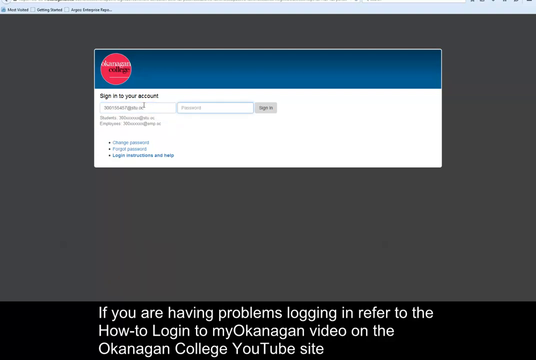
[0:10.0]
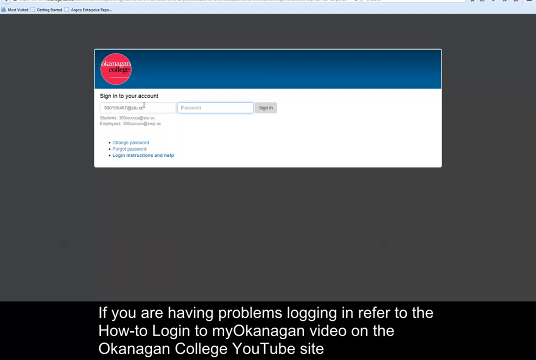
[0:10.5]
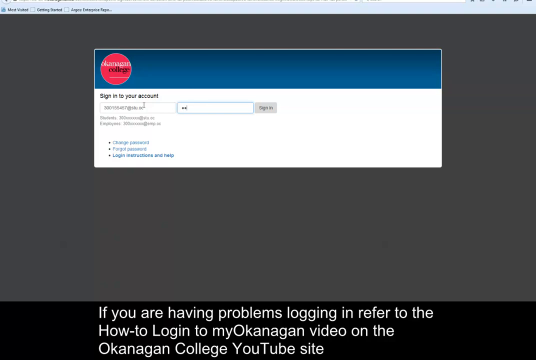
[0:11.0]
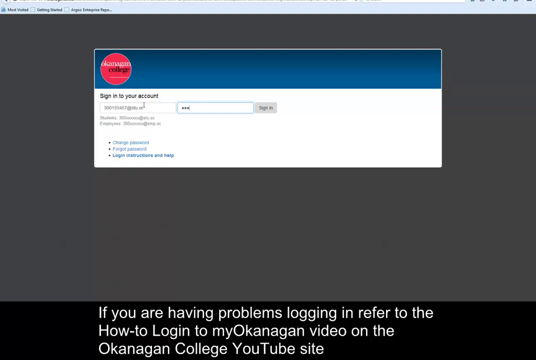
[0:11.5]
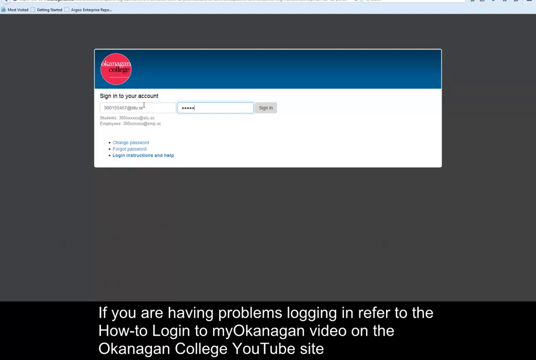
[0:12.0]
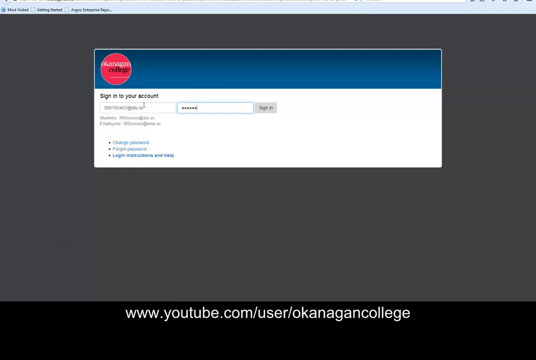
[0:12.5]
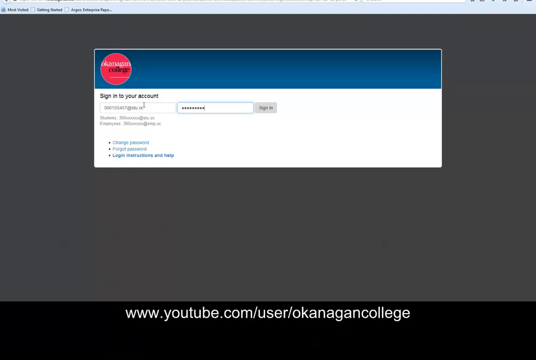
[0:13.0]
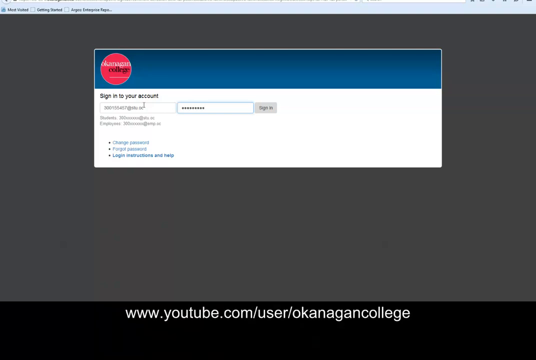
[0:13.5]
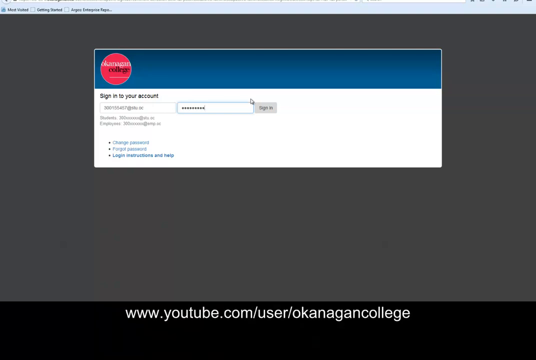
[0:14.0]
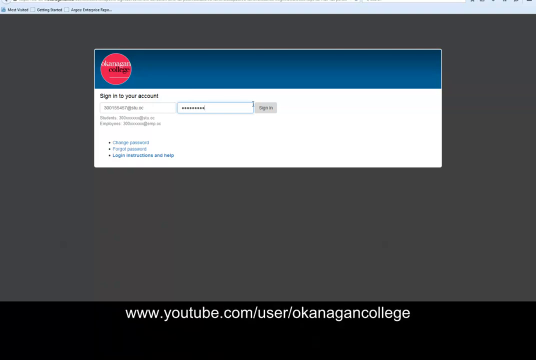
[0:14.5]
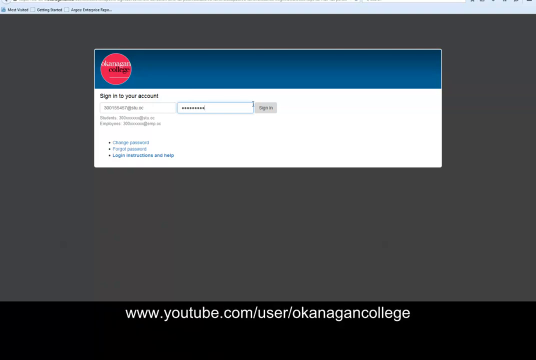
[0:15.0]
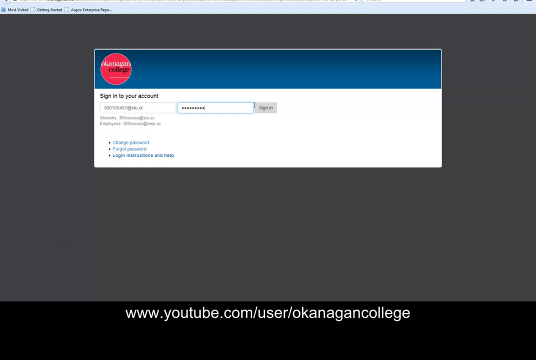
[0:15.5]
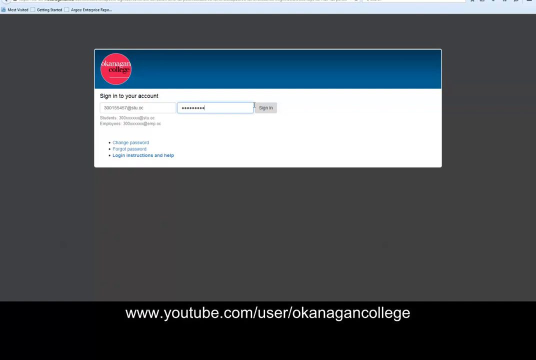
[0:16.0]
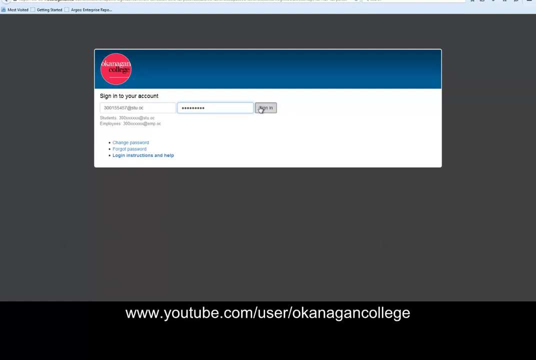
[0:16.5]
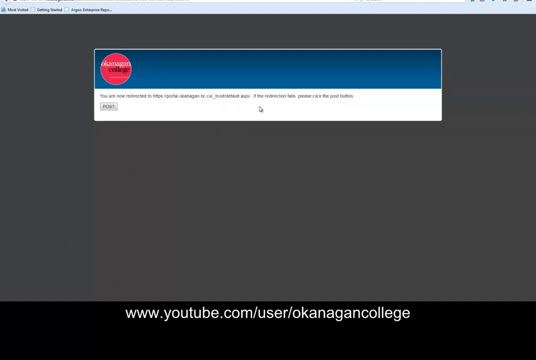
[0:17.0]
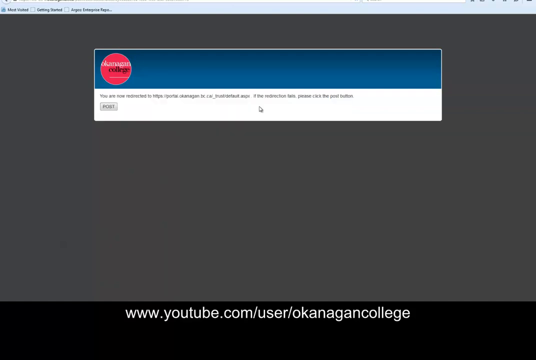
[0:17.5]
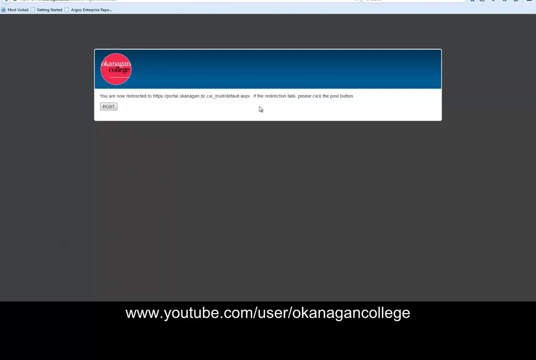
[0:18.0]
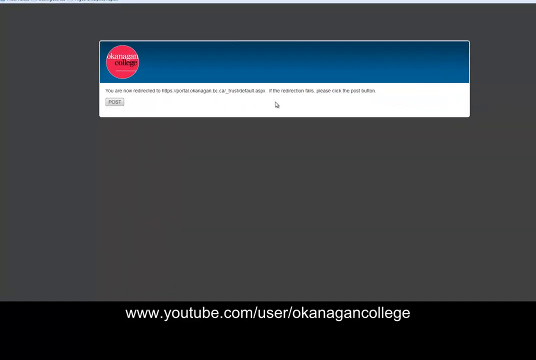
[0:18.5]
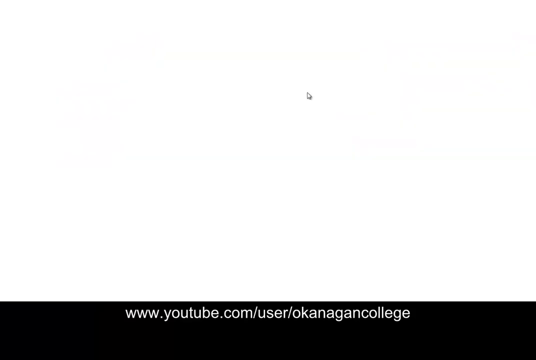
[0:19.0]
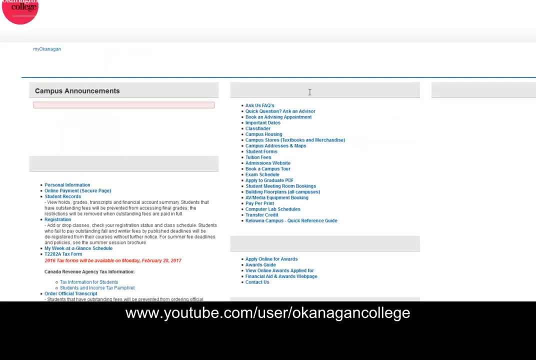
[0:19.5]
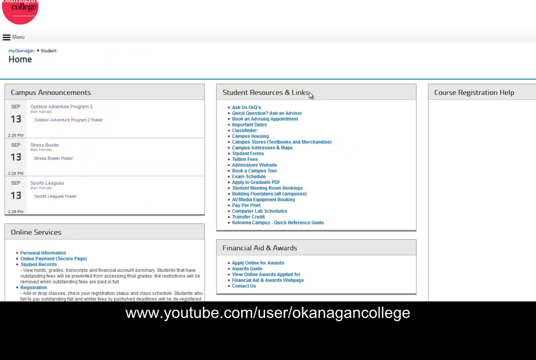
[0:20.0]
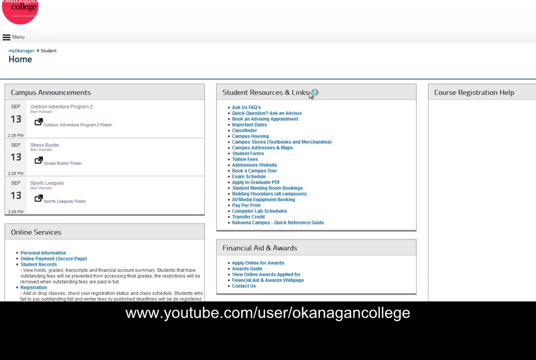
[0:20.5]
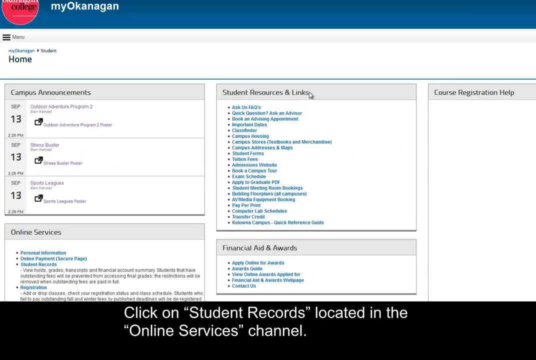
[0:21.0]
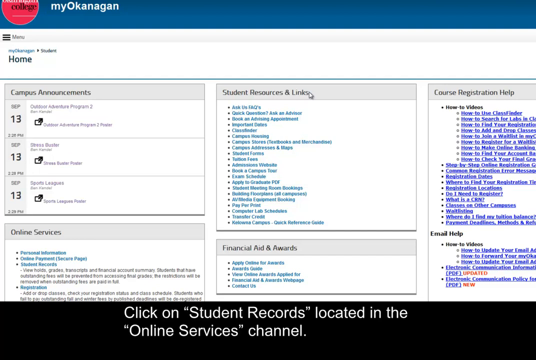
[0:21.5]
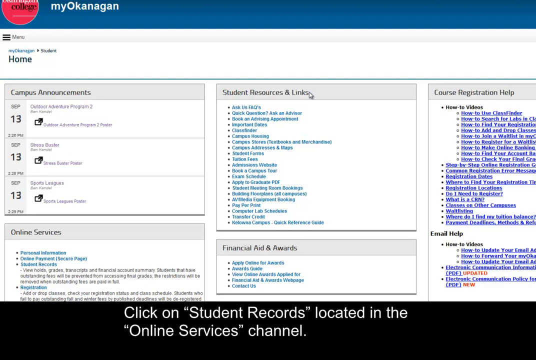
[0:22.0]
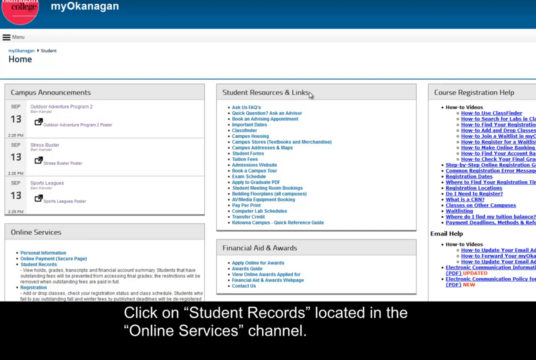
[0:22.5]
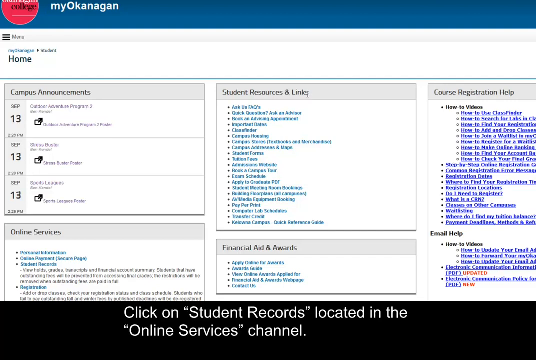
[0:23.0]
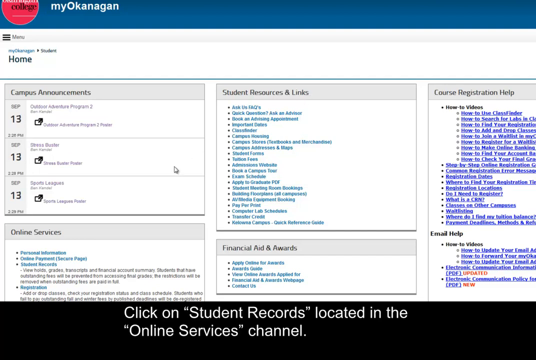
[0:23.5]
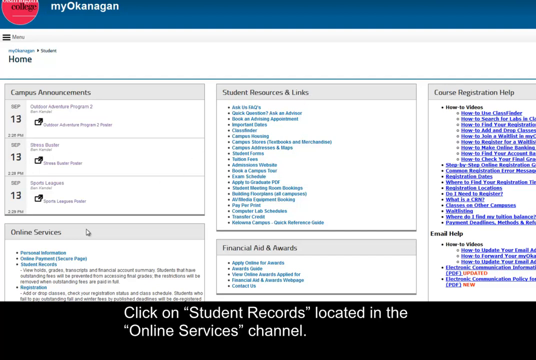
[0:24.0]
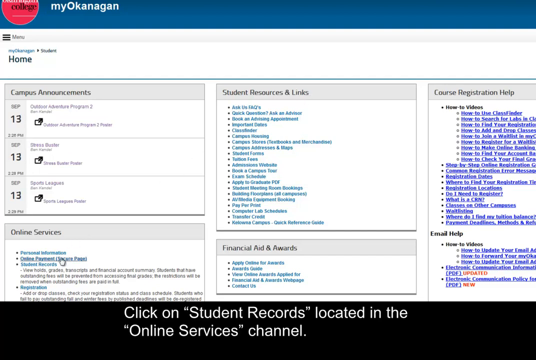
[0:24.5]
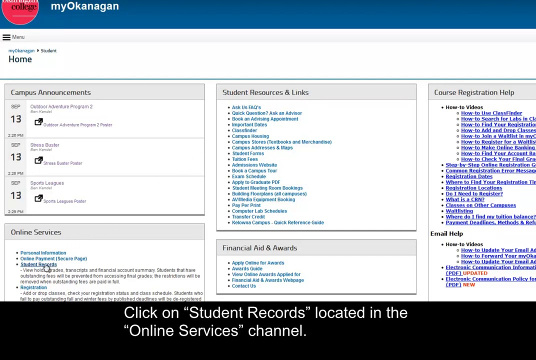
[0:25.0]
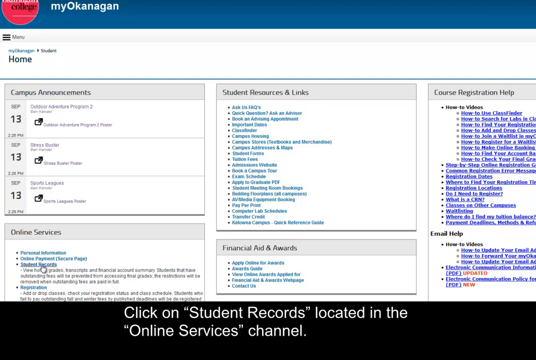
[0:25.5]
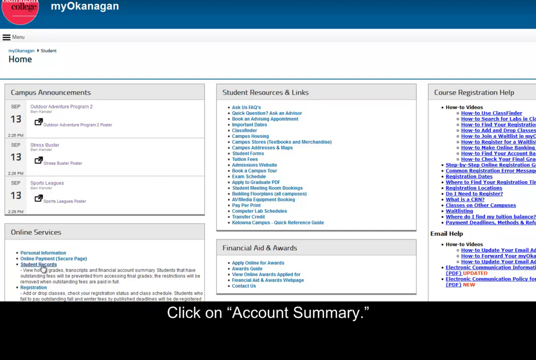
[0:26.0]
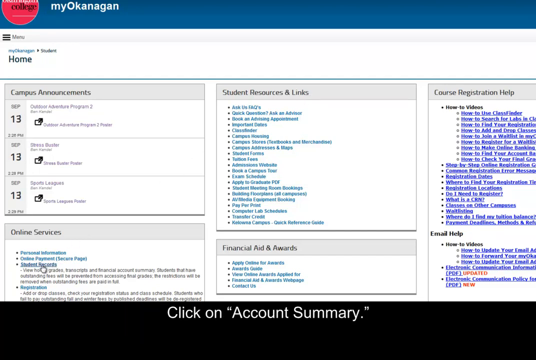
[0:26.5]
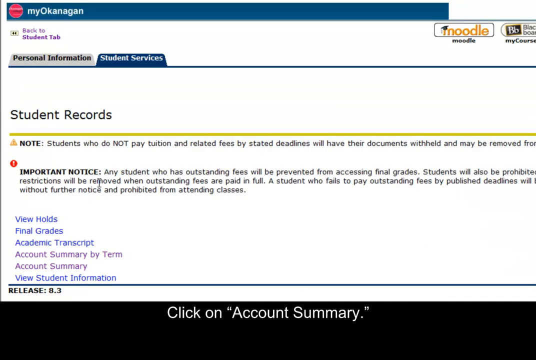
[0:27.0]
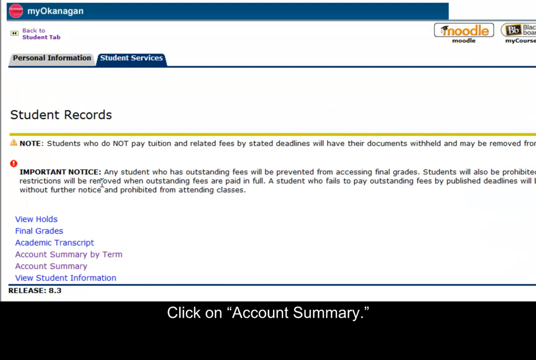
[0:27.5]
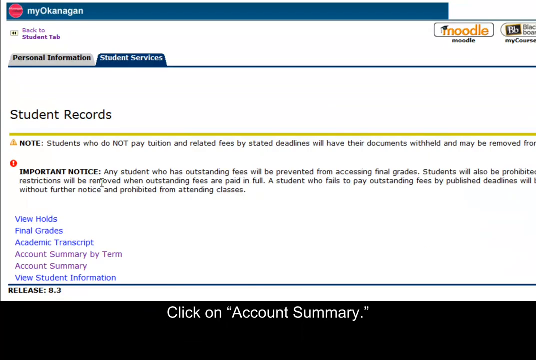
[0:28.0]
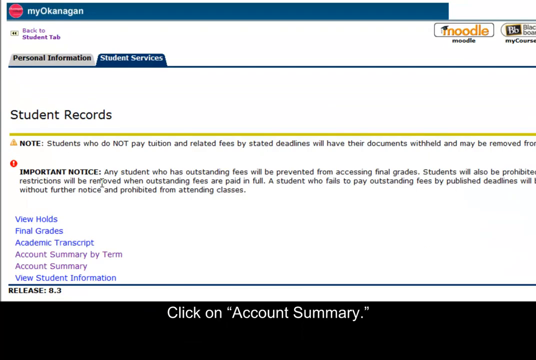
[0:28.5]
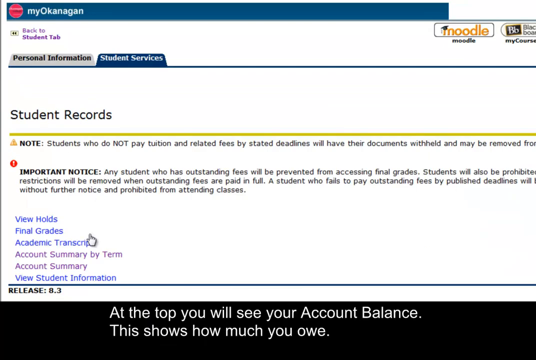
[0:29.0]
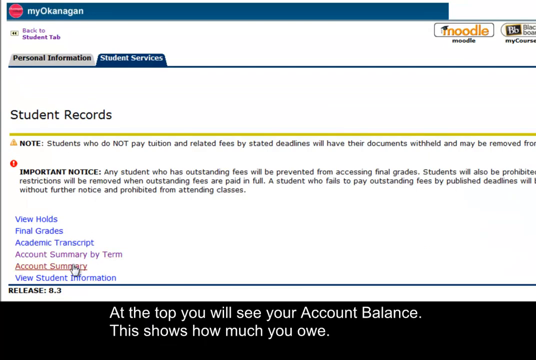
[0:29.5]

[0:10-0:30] The poster, apparently of Okanagan College, is still shown, with a caption below that says "www.youtube.com/user/Okanagan College." On screen there seems to be a login, done by filling in the username. After the successful login, the page changes to what seems to be the home website of Okanagan College, with "My Okanagan" in the top left corner and "home" written in black below it. There seem to be sections for campus announcements, topics, online services, student resources and links, and financial aid and awards. A caption below says "click on student records located in the online services channel and then click on account summary." The user clicks what appears to be student records, and on the My student records page the user seems to click on account summary.